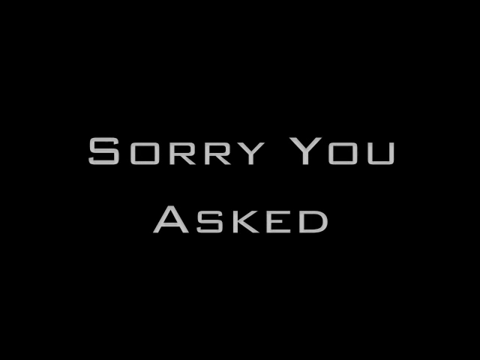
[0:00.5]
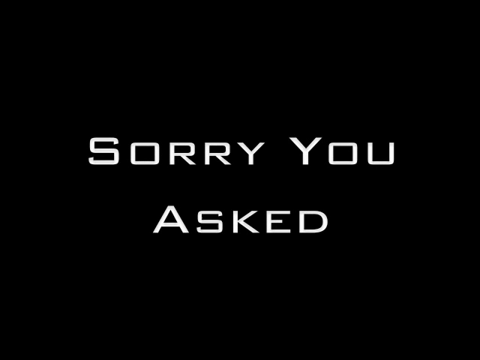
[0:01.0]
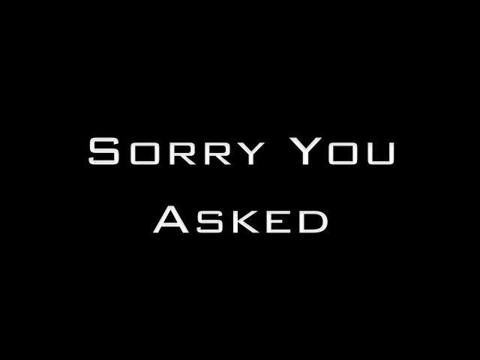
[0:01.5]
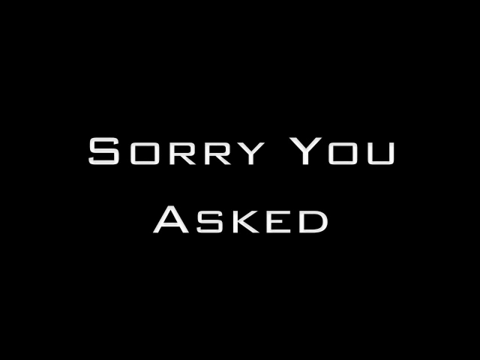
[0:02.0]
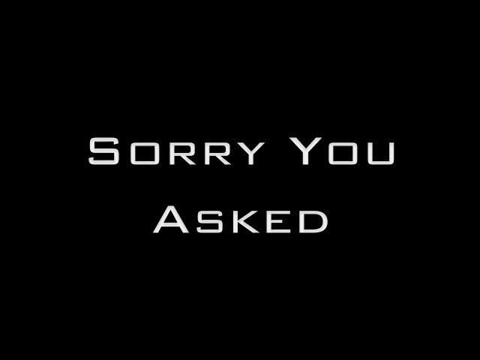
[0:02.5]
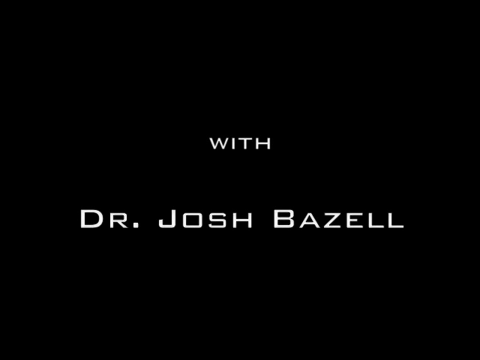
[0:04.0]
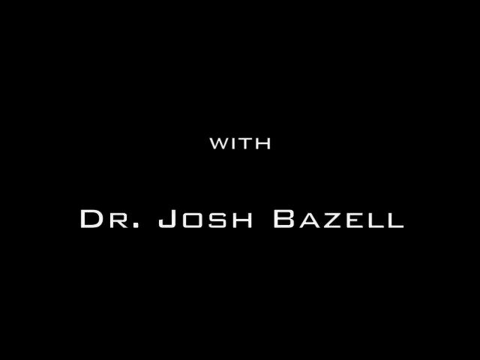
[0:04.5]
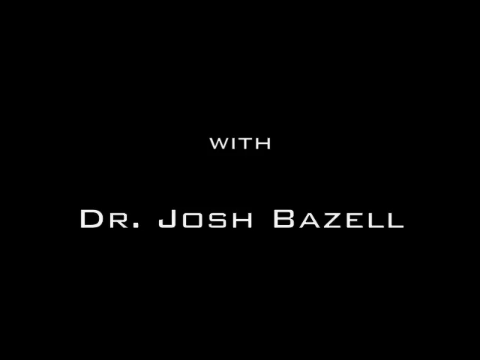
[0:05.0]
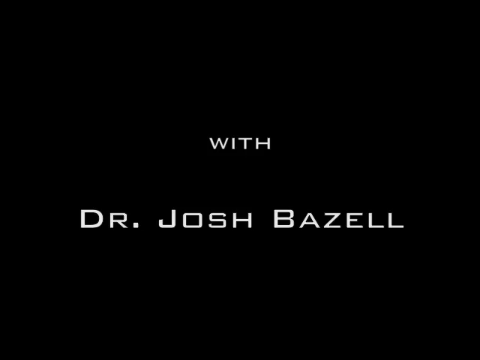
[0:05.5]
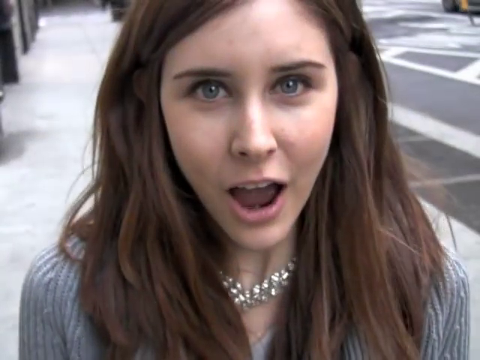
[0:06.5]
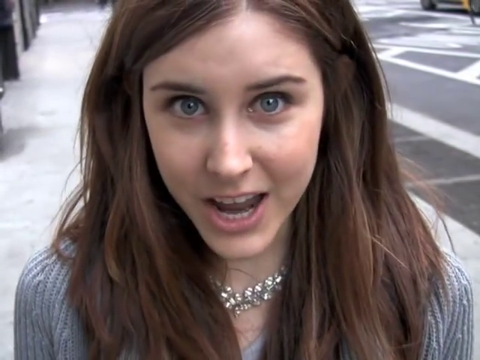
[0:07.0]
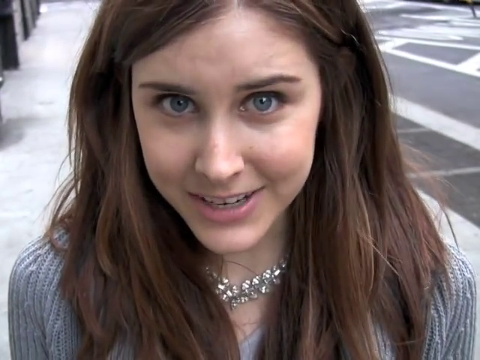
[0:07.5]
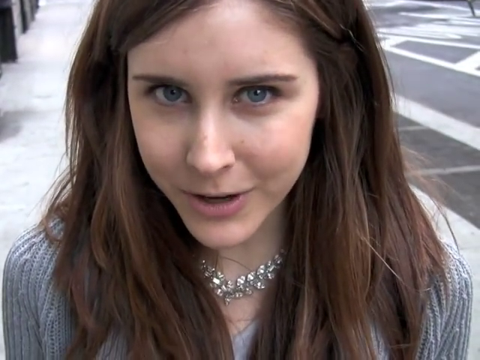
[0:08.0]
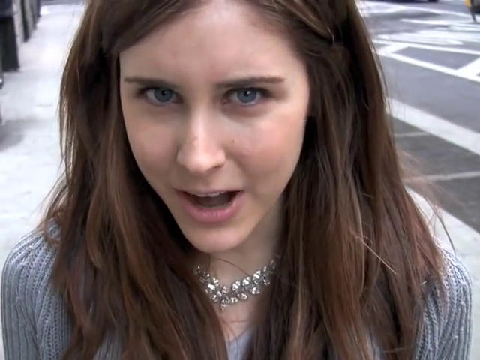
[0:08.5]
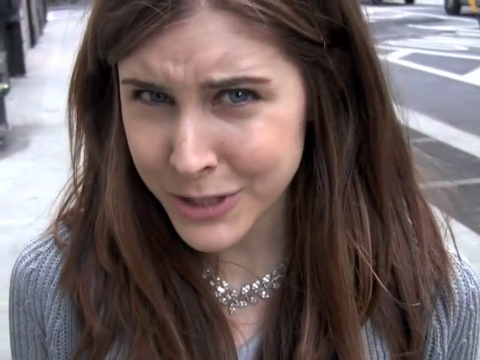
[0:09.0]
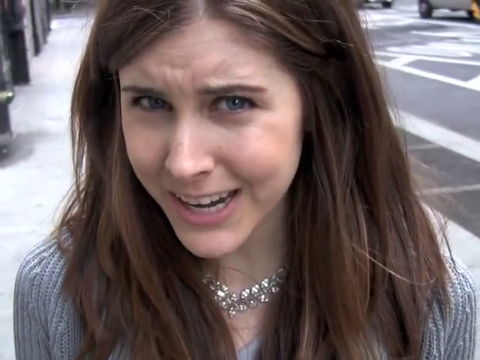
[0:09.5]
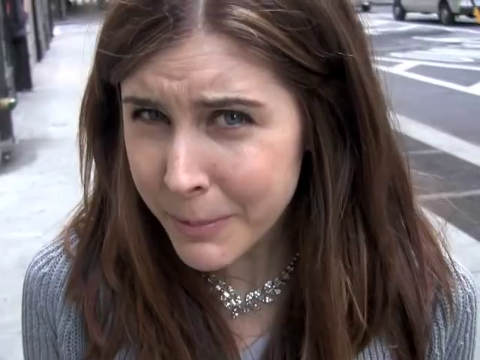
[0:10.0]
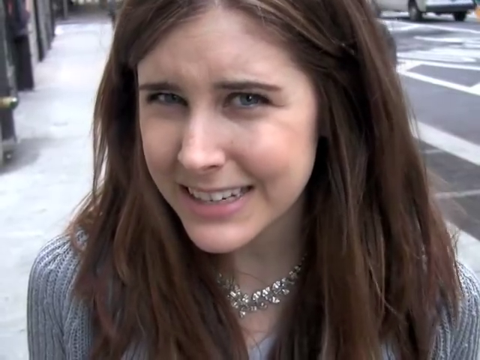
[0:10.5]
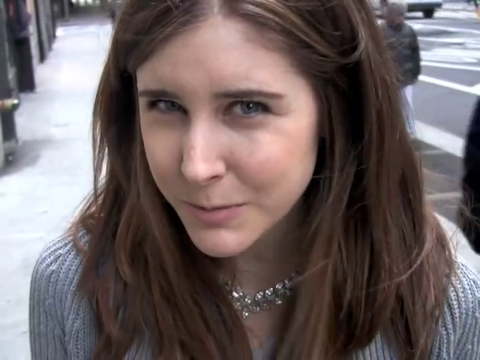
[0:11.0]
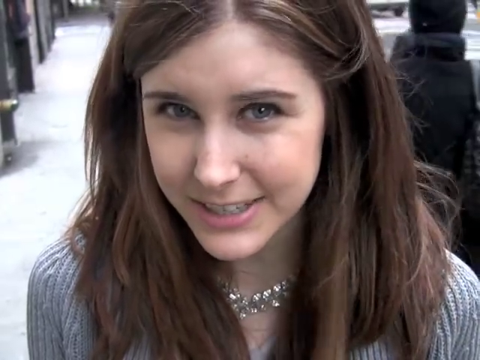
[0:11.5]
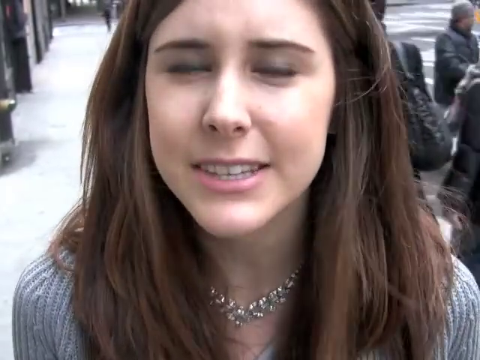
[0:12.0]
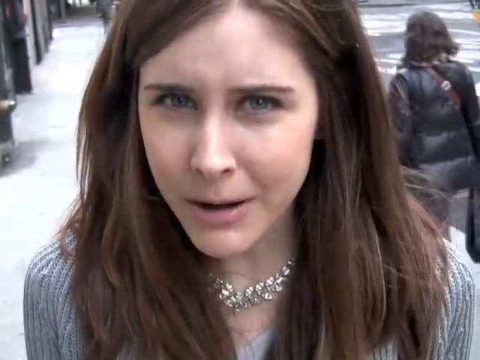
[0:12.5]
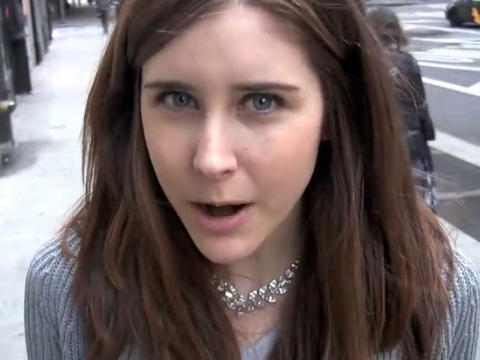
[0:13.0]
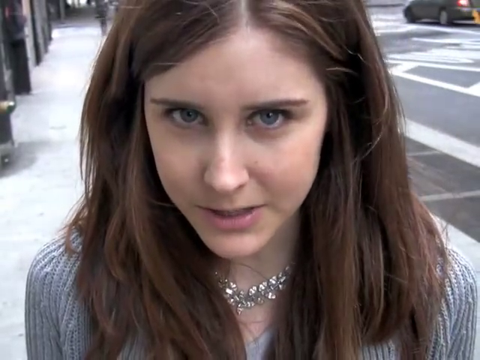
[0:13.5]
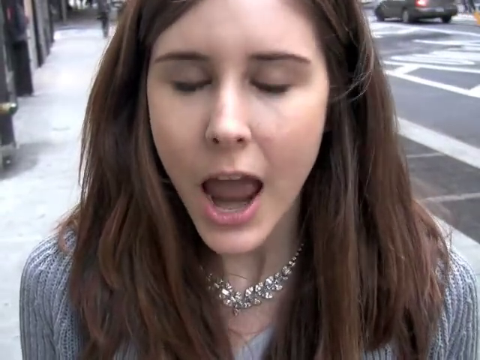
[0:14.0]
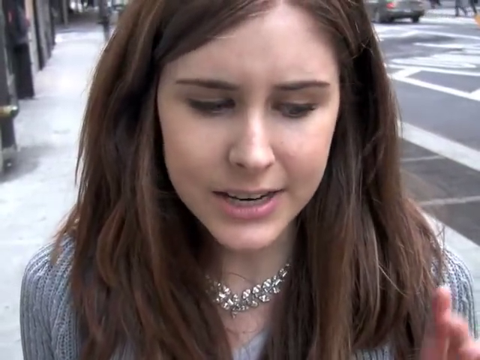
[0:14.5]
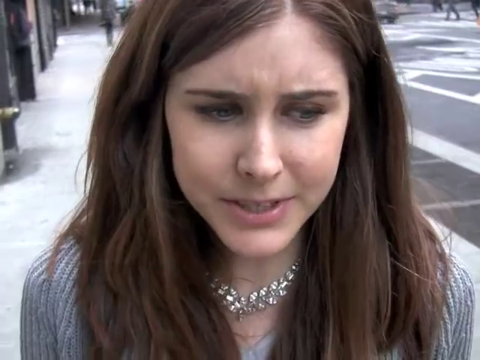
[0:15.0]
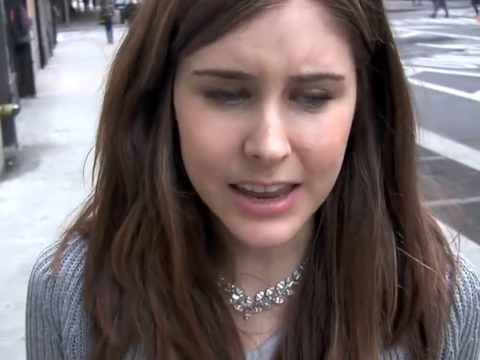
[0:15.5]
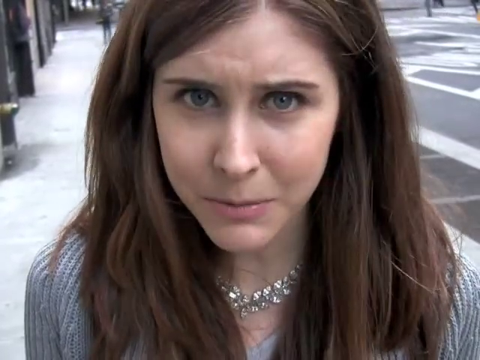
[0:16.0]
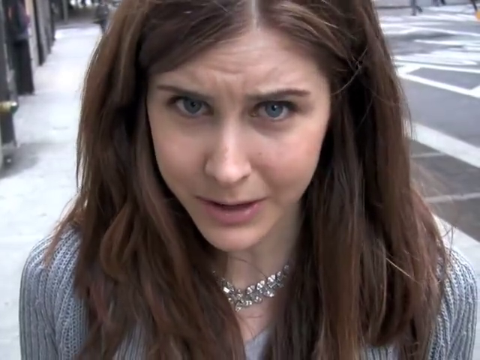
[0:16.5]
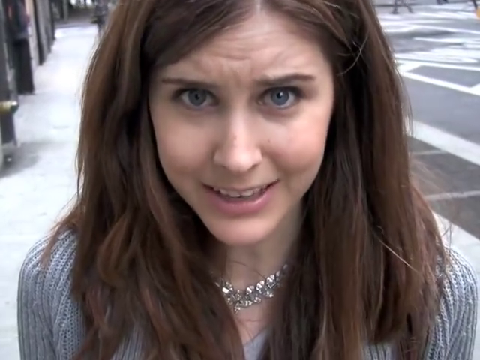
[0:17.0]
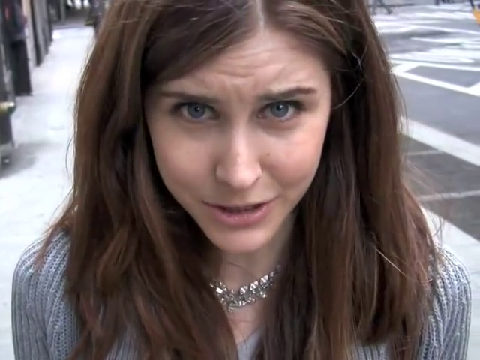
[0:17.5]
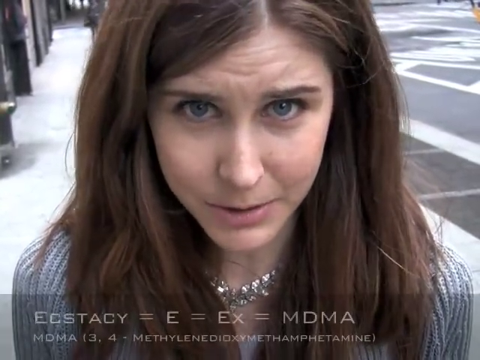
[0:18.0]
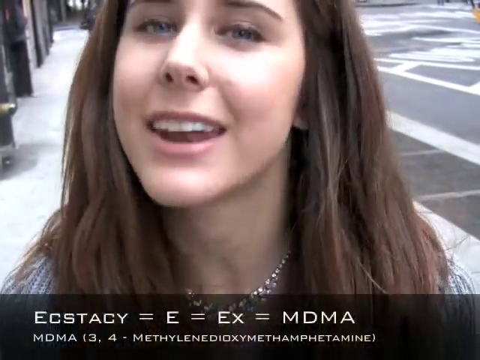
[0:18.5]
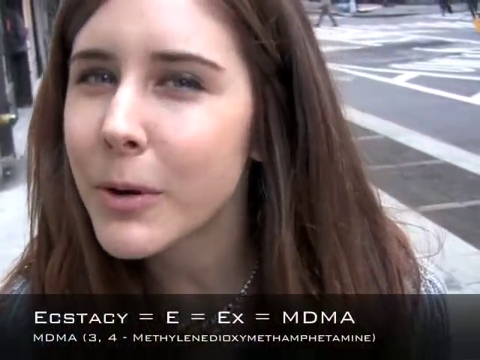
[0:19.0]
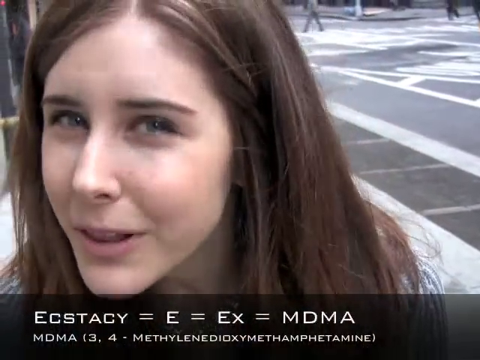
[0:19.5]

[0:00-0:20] Against a solid black background, white capital letters read "Sorry, You" on the first line and, centered beneath it, "Asked". Next, more white text appears on the black background: "With" centered on the first line and, beneath it, "Dr. Josh Bazell", all in capital letters. Then a young woman is shown close up from the shoulders up, standing on a sidewalk in a street. She is an attractive young woman, perhaps 20 to 25, wearing a silver sweater and a sparkly choker. She has dark brown straight hair parted on the side, light blue eyes and fair skin. She makes a somewhat sarcastic face, crunching up her eyebrows at one moment and smirking a bit. It is daytime.